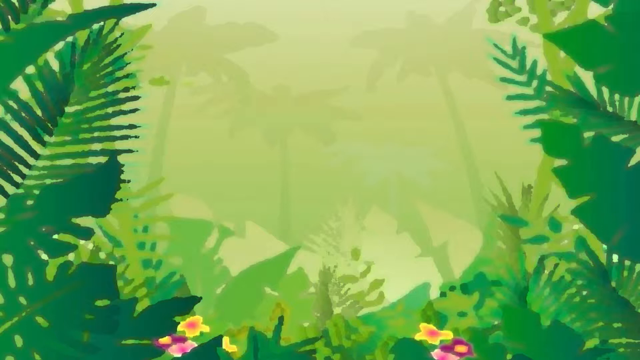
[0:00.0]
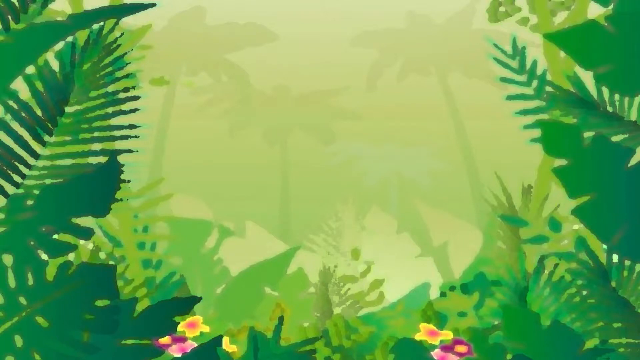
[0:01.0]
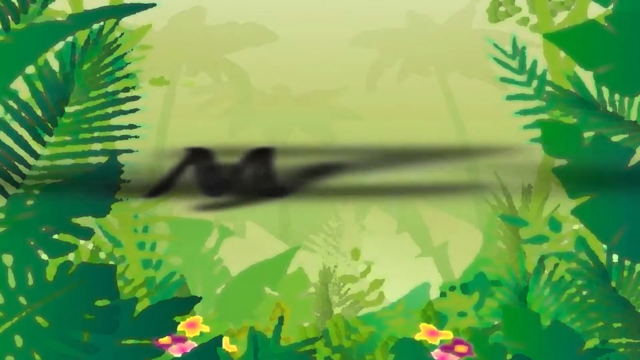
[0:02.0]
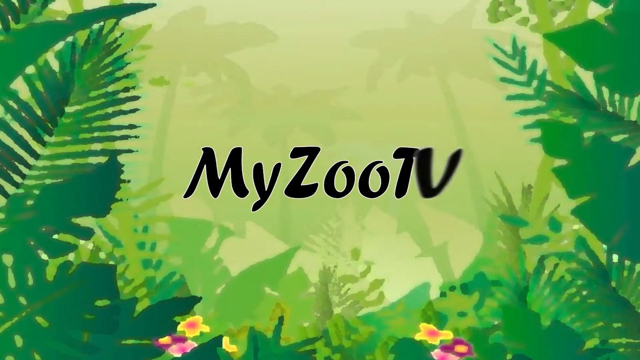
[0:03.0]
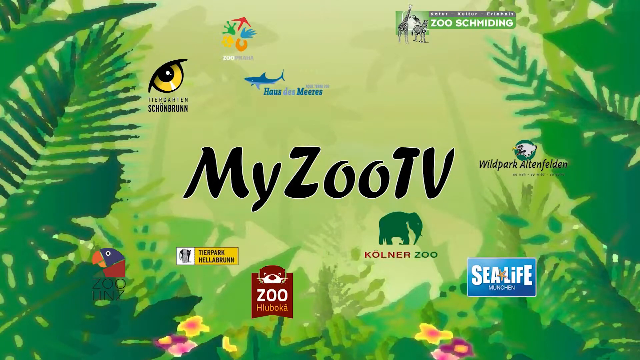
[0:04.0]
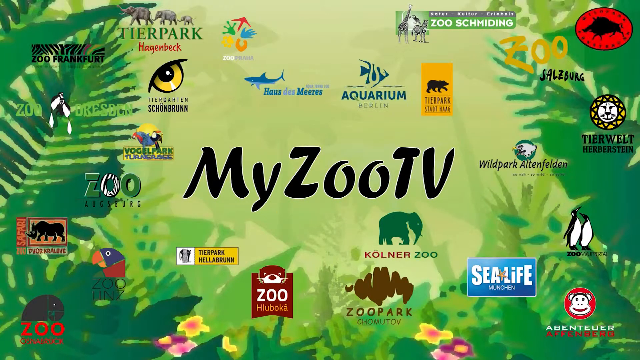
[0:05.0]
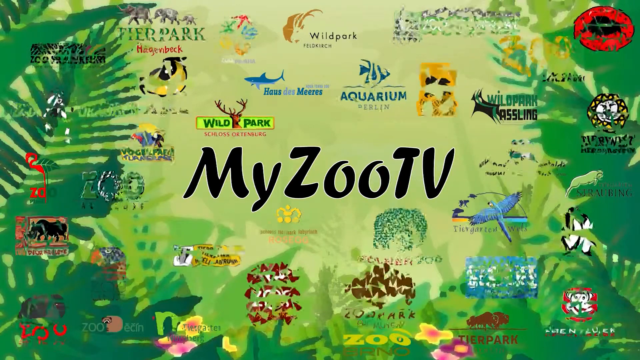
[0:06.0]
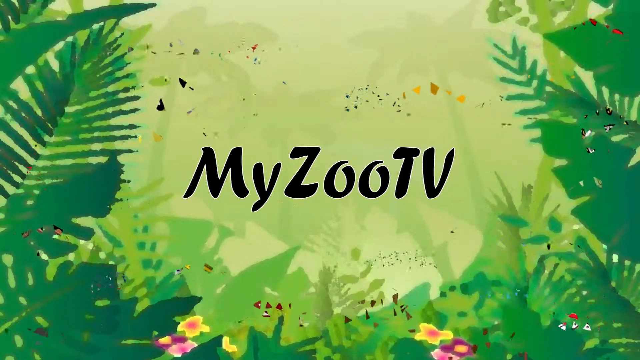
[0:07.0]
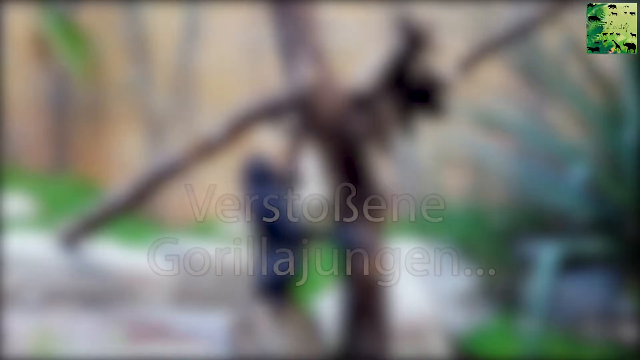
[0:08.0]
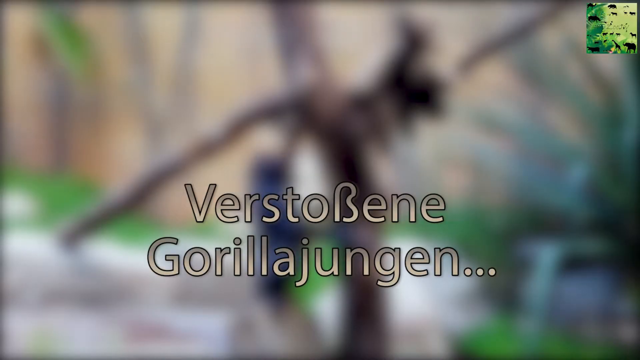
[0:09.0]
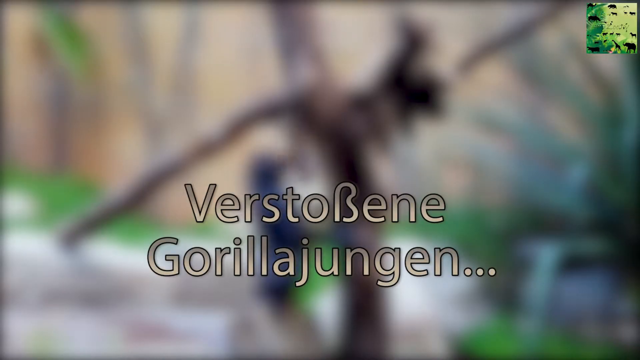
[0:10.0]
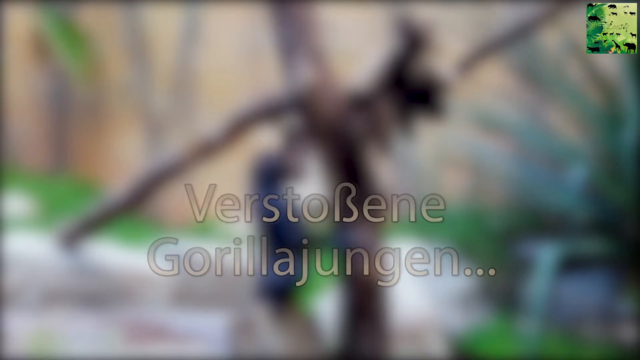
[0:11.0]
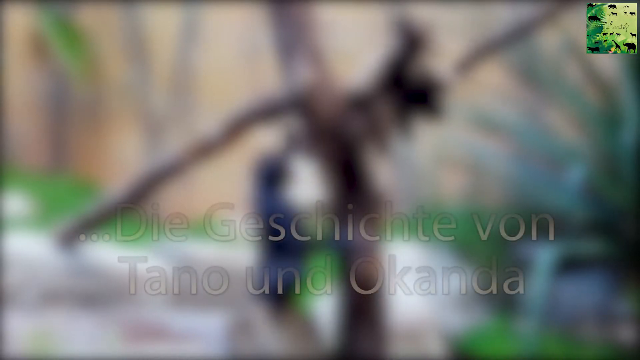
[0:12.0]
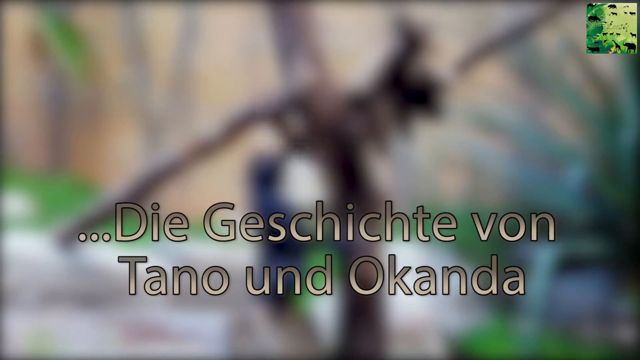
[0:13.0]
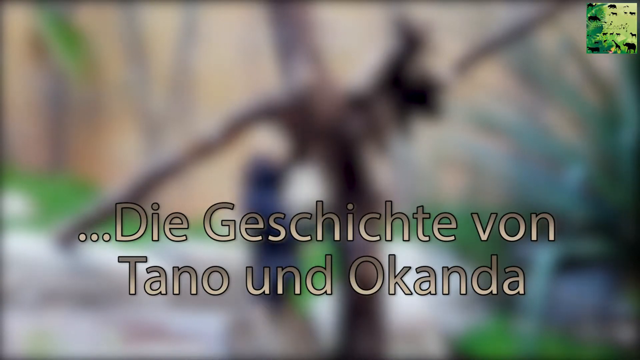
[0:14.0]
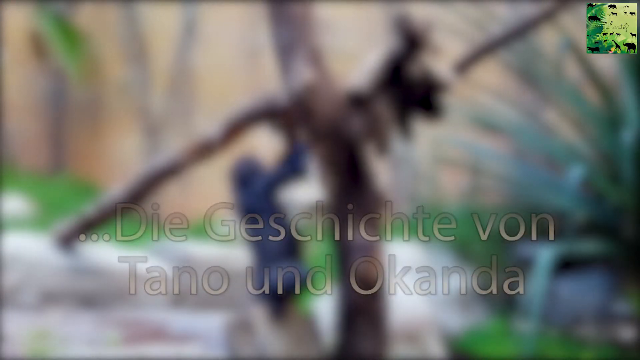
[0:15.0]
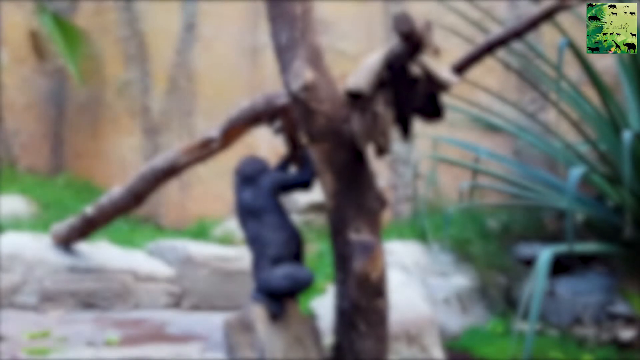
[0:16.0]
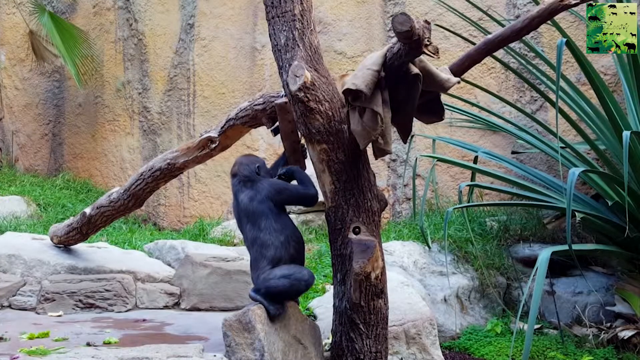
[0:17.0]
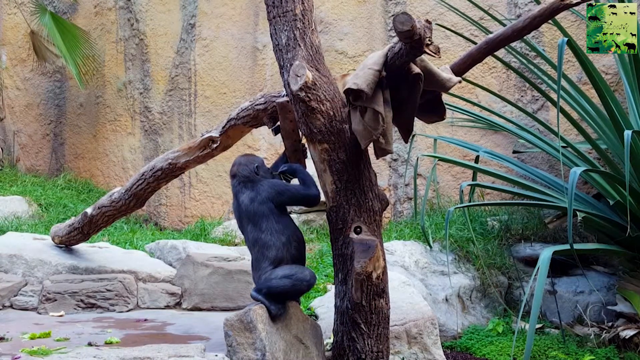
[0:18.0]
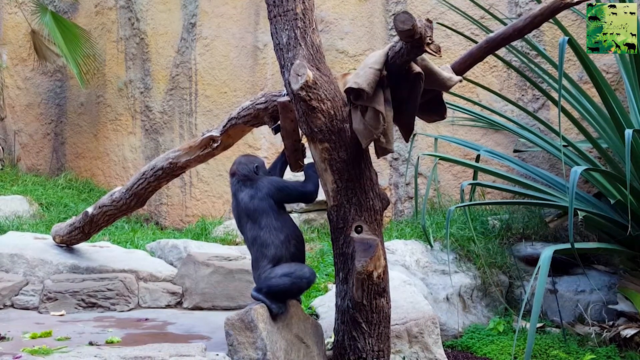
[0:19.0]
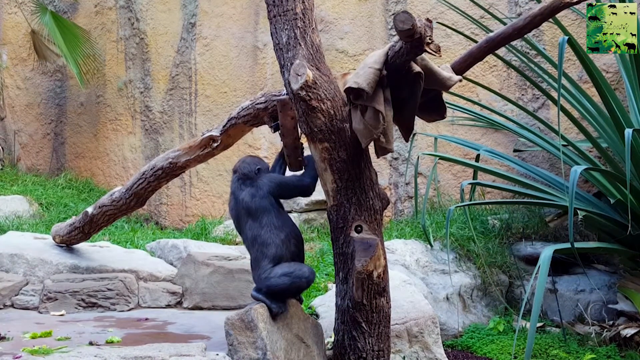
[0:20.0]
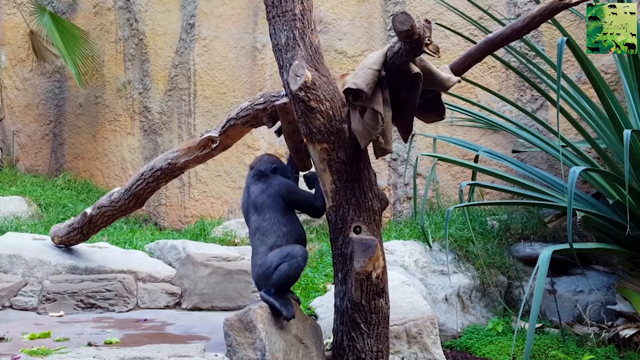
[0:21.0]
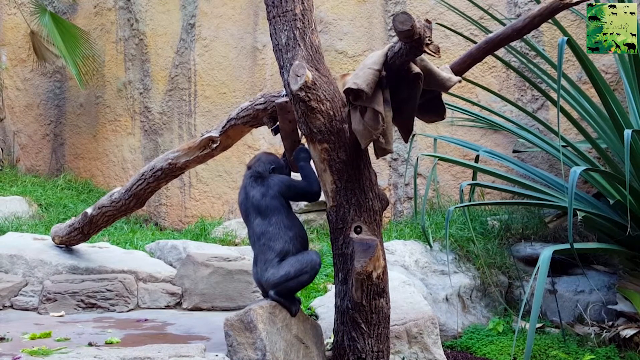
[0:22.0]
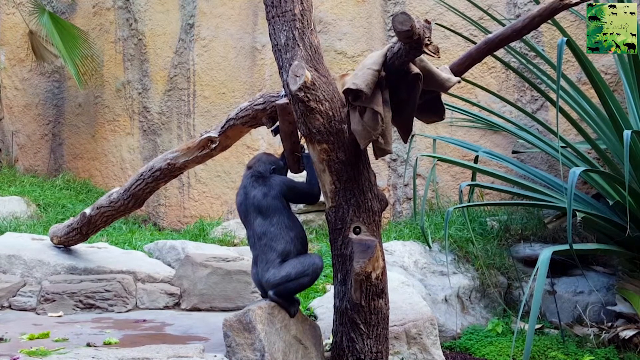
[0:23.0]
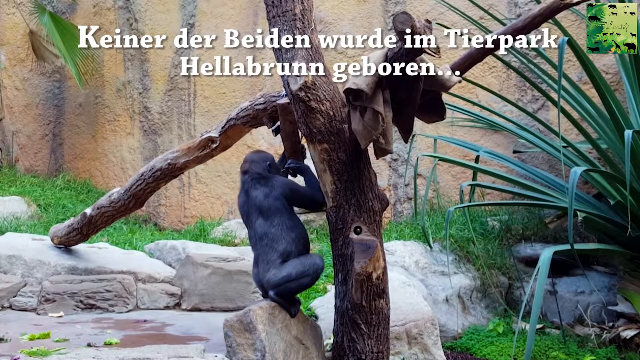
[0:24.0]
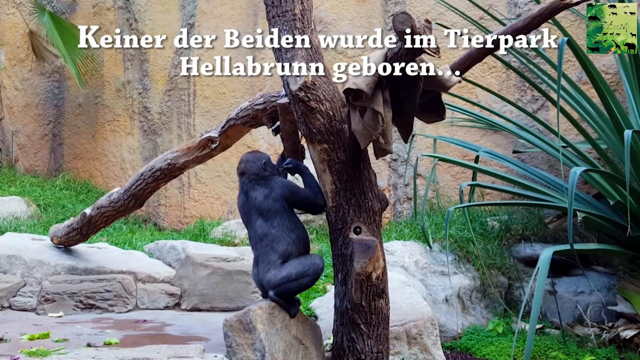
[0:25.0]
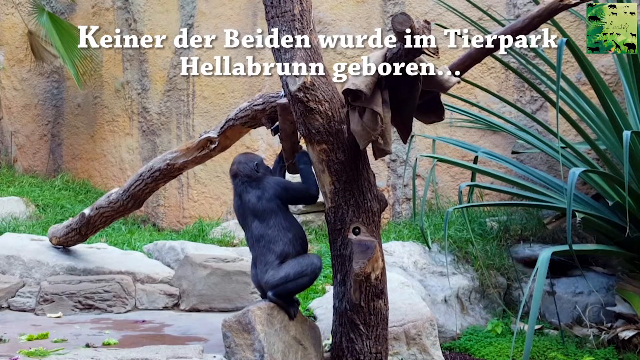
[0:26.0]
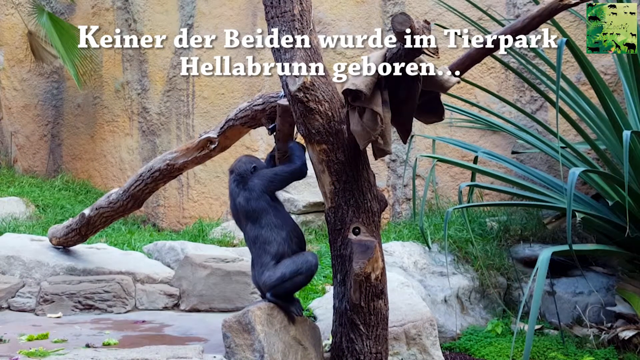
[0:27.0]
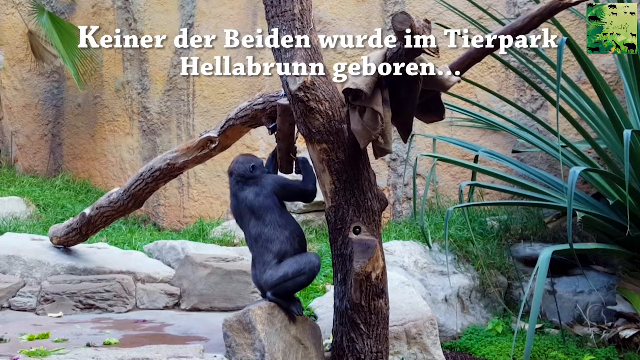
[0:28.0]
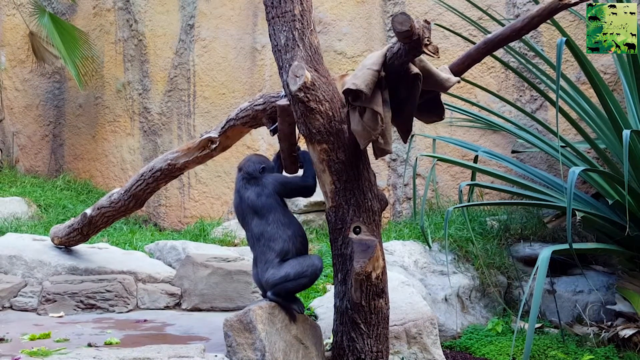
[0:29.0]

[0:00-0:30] The video opens on a screen with a kind of watercolor jungle motif in the background. In a sort of flash, the words "MyZooTV" pop up in the center; everything in the background is bright green and the words are in black text. Various logos of different zoos then pop up, seemingly zoos in Germany, as the one in the upper left corner reads "Zoo Frankfurt". The logos all explode in a confetti-like effect. The screen then changes to some words that are not in English over a kind of blurry background in which some things are moving, possibly a person. Once the text goes away, the image comes into full clarity, revealing a monkey doing something with two trees in the center of its habitat, almost as if using a stick as a tool. Some white text appears at the top of the screen. The habitat has white rocks, with some plant life around the outside of where the animal is.